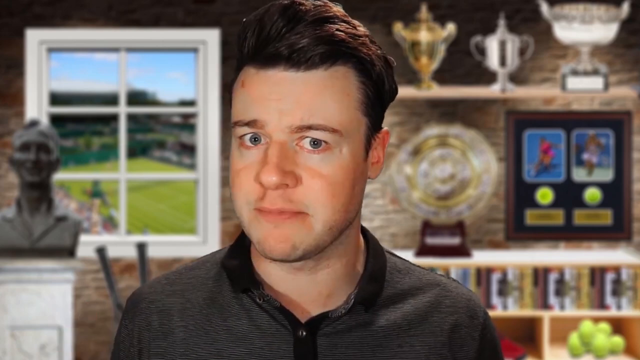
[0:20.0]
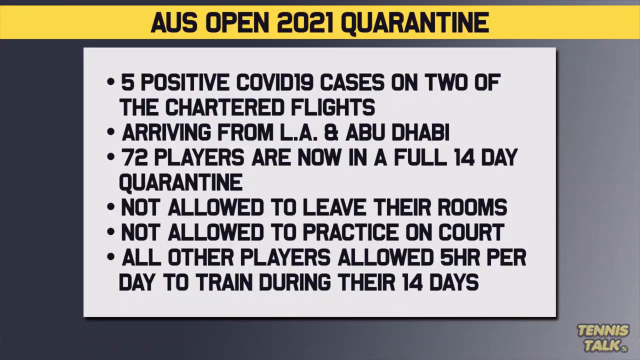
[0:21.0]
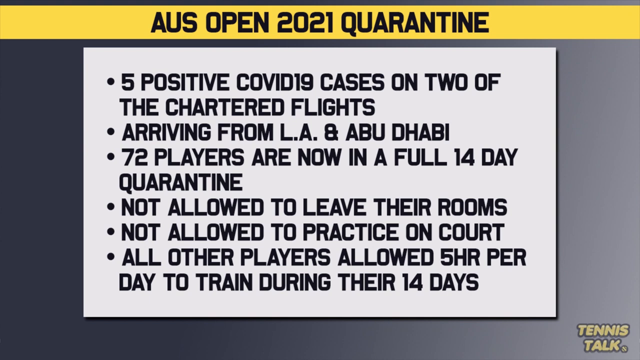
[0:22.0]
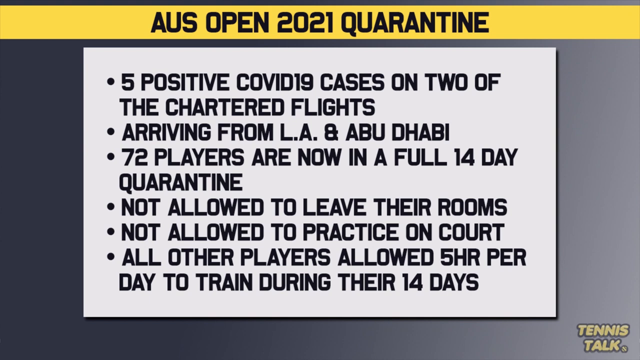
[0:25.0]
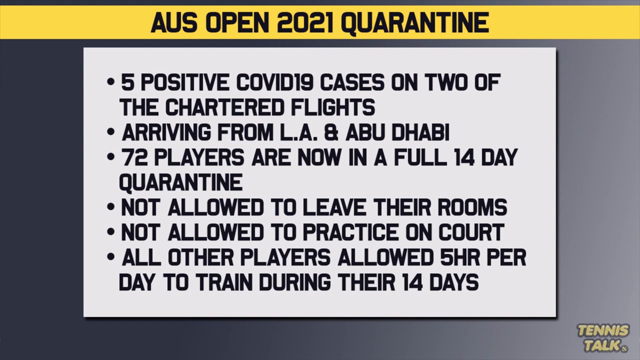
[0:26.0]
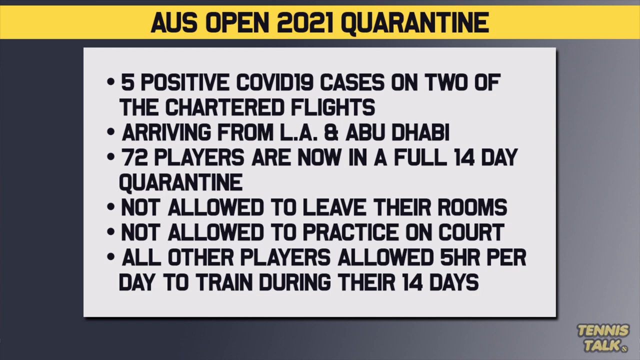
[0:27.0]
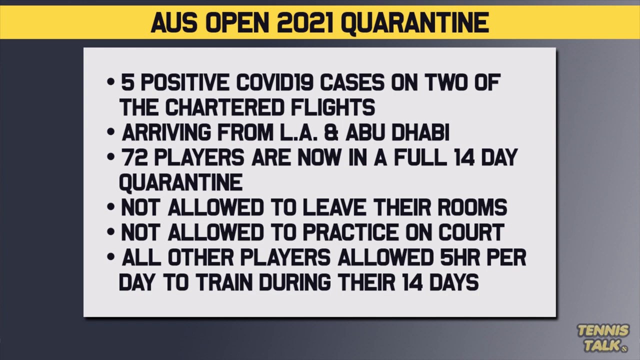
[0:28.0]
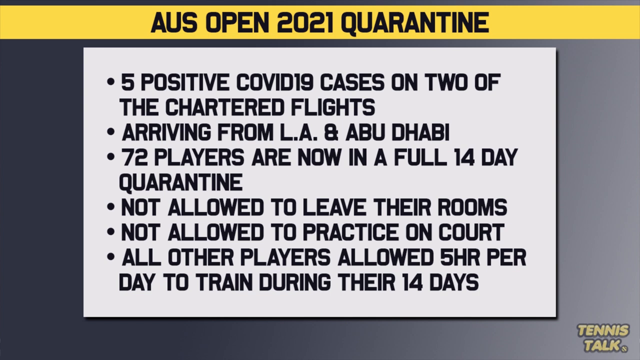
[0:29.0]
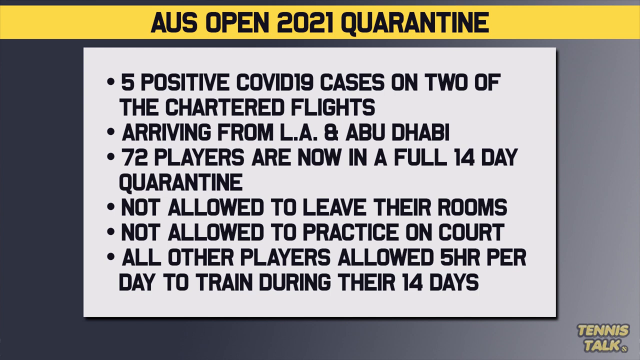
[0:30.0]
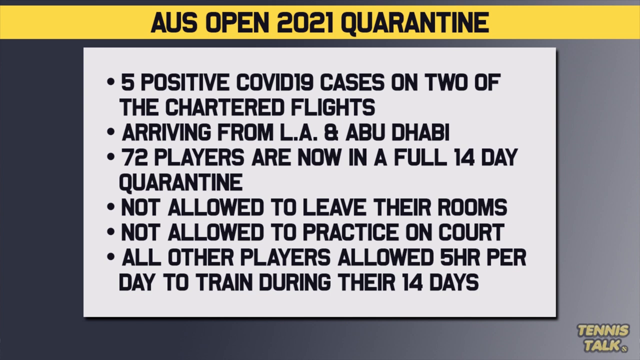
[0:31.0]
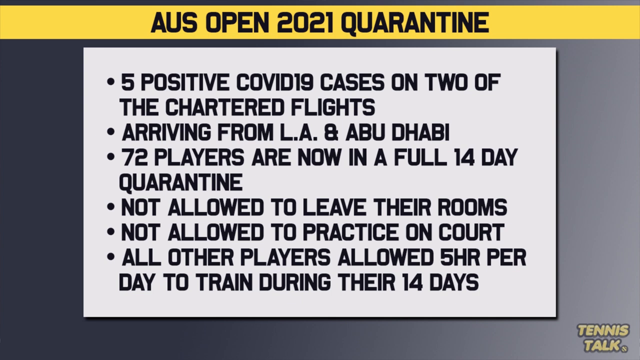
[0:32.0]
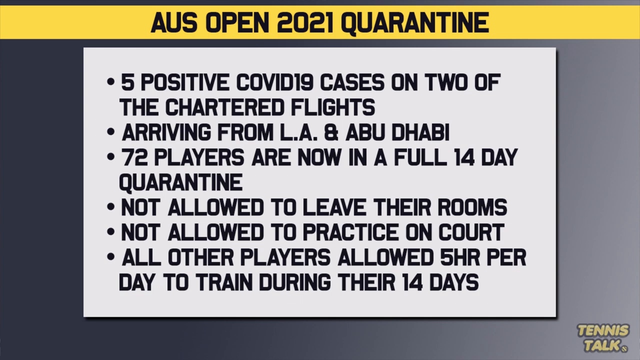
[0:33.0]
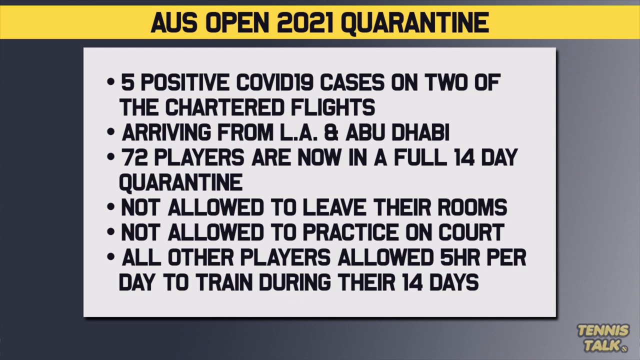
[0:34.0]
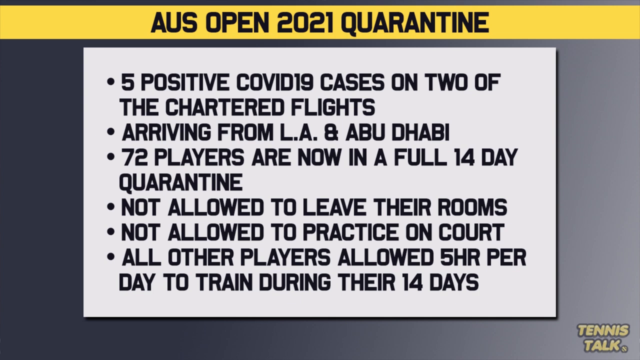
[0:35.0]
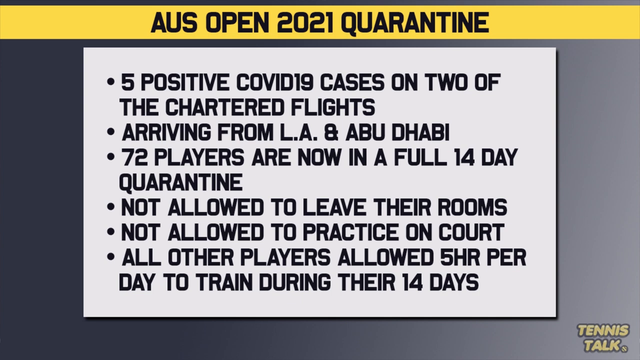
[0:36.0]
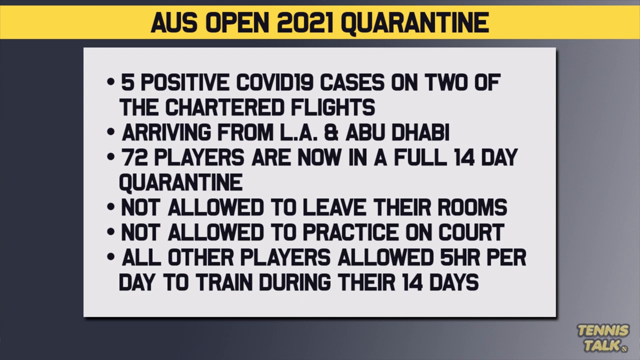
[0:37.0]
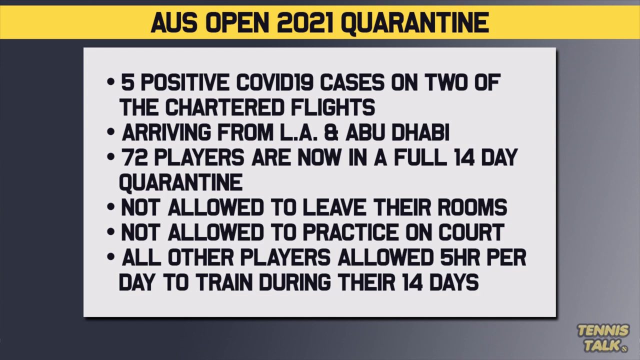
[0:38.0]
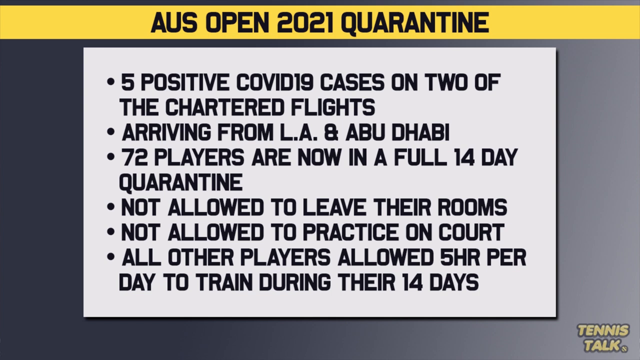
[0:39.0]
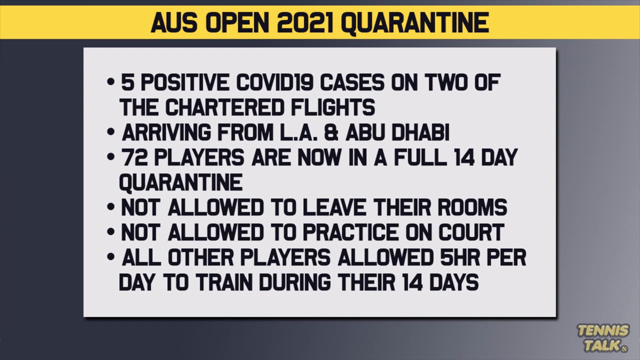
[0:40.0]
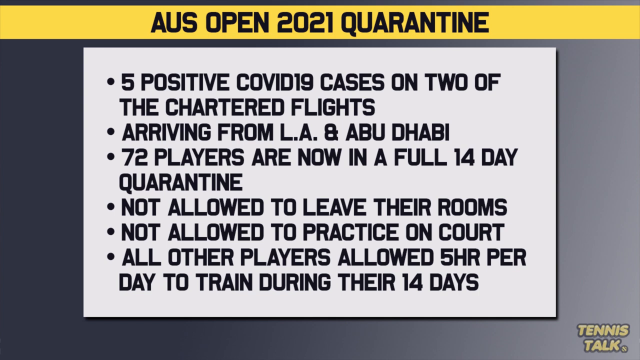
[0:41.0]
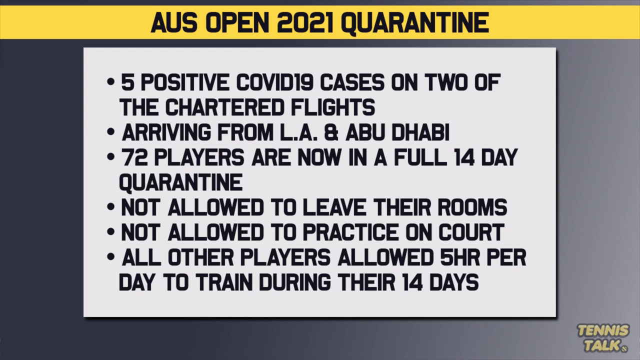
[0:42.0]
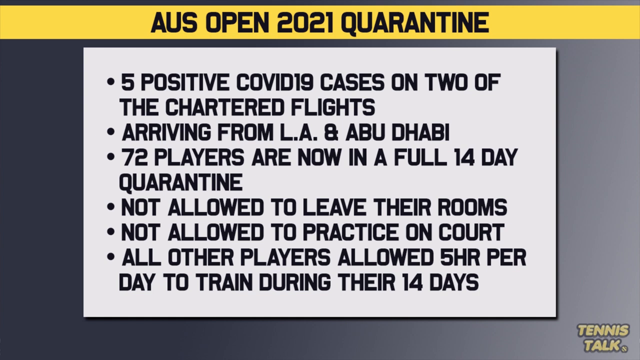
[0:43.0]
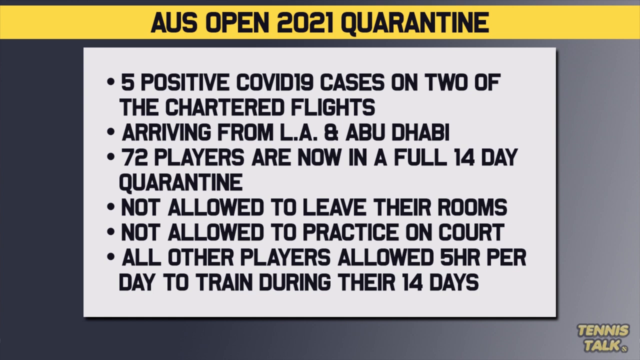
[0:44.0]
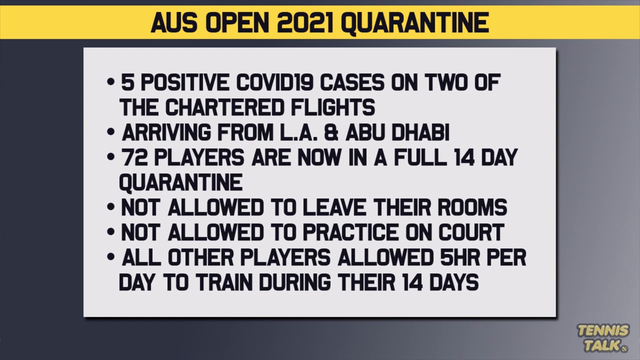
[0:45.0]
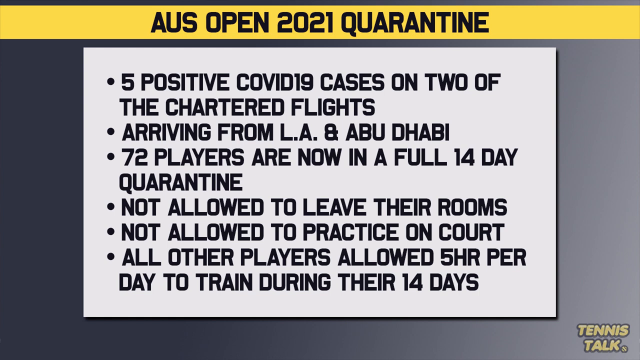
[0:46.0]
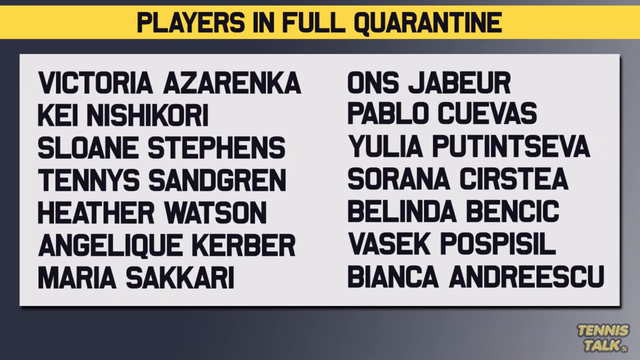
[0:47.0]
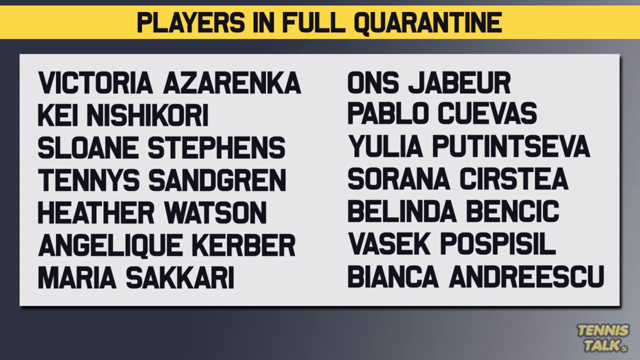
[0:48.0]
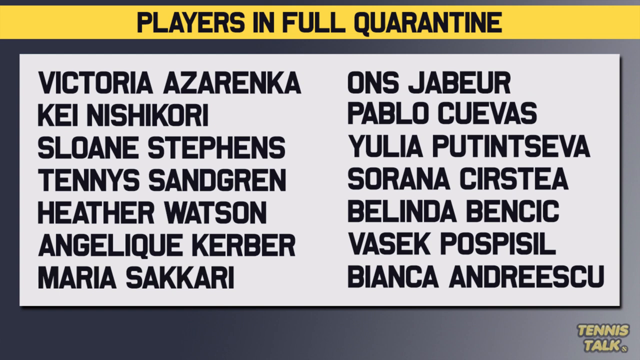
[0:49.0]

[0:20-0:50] A man in a stone-walled room faces the camera as he speaks. Behind him on the left is a window with a white frame that has what looks like an artificial image of a meadow and some mountains in it, and right in front of it is a bust of some figure. To the right behind him are two shelves: the top shelf holds three trophies, the second holds two additional trophies, and underneath them is what looks like more sports memorabilia. He looks directly at the screen while speaking for a few seconds before the scene shifts to lines of text. At the top of the screen is a yellow bar with the black words "AUS Open 2021 Quarantine". Below it, on what looks almost like a sheet of paper with a white background, are six bullet points: "5 positive COVID-19 cases on two of the charted flights", "arriving from LA and Abu Dhabi", "72 players are now in a full 14-day quarantine", "Not allowed to leave their rooms", "Not allowed to practice on court", and "all other players allowed 5 per day to train during their 14 days". This remains on screen for most of the shot. A few seconds before the end, the scene changes: the yellow bar remains at the top, but its black text now reads "players in full quarantine". Below it is another sheet of what looks like paper with a white background, a little wider and filling more of the screen, with seven rows and two columns. The left column lists Victoria Azarenka, Kei Nishikori, Sloane Stephens, Tennys Sandgren, Heather Watson, Angelique Kerber and Maria Sakkari. The right column lists Ons Jabeur, Pablo Cuevas, Yulia Putintseva, Sorana Cirstea, Belinda Bencic, Vasek Pospisil and Bianca Andreescu. This stays on the screen to the end of the shot.